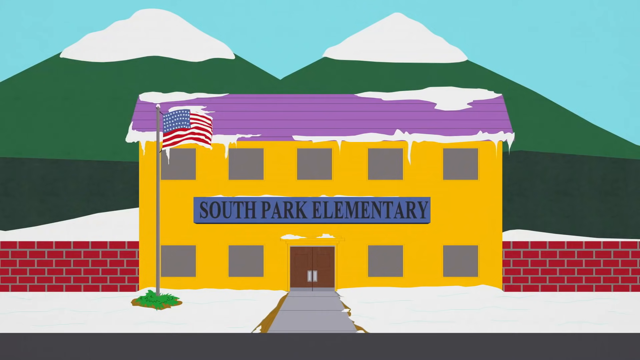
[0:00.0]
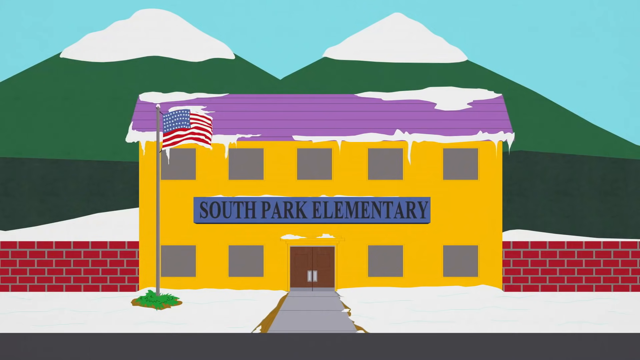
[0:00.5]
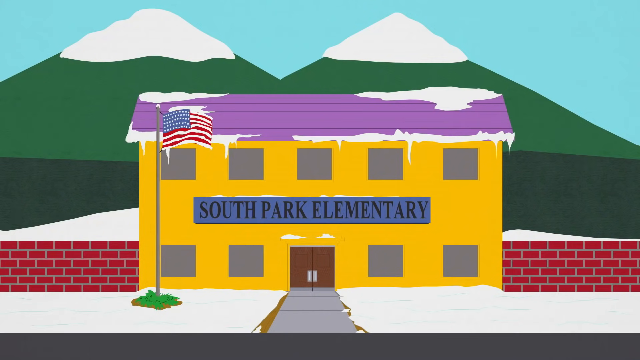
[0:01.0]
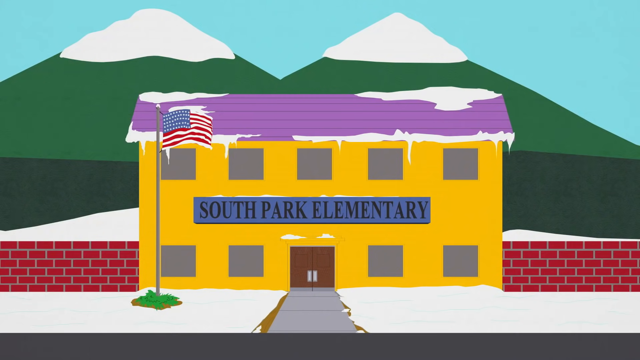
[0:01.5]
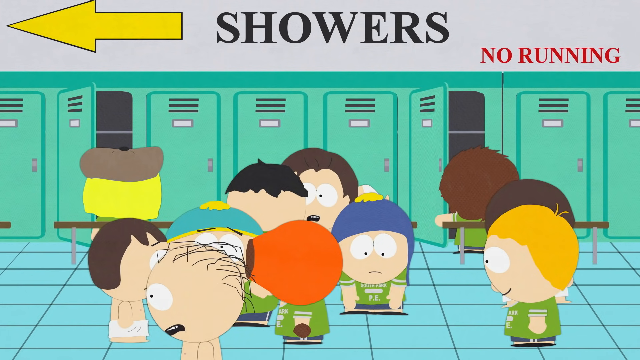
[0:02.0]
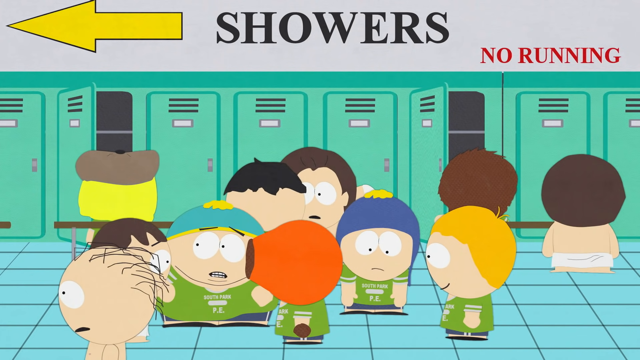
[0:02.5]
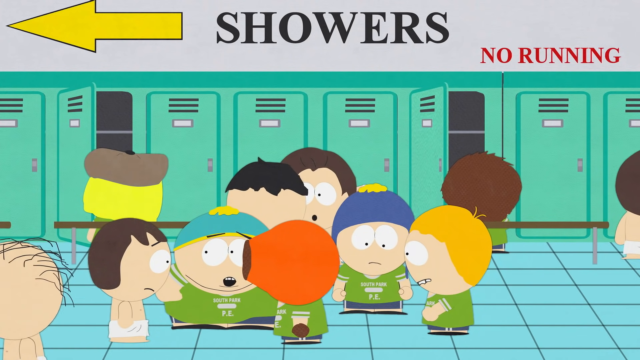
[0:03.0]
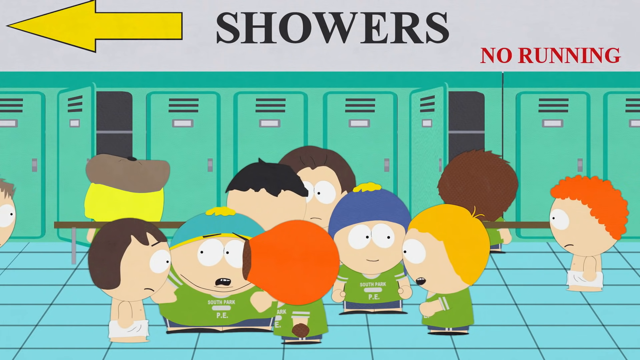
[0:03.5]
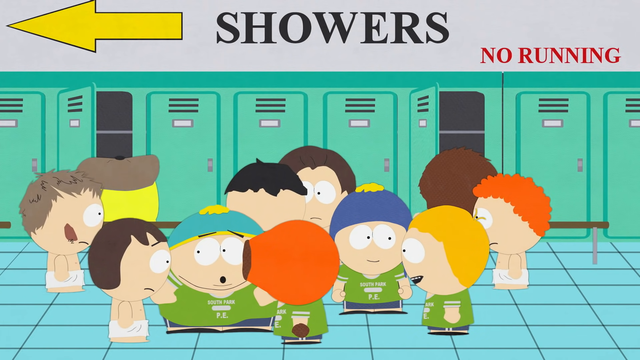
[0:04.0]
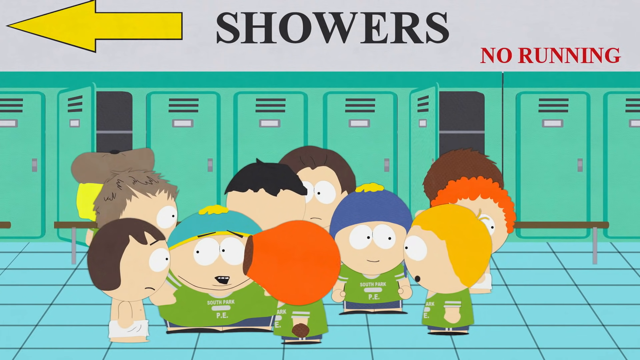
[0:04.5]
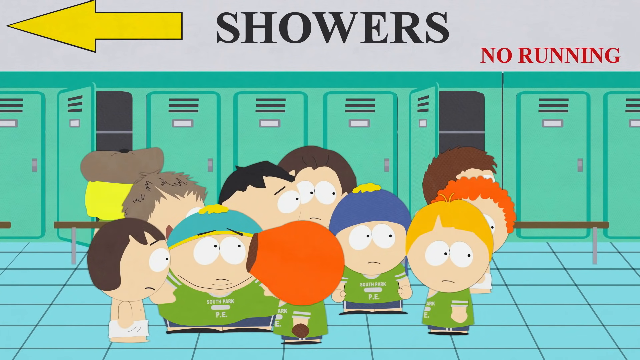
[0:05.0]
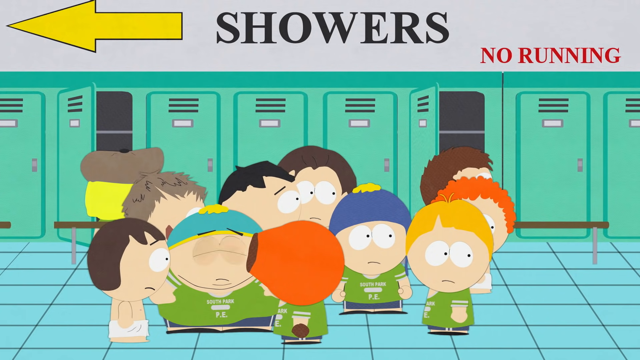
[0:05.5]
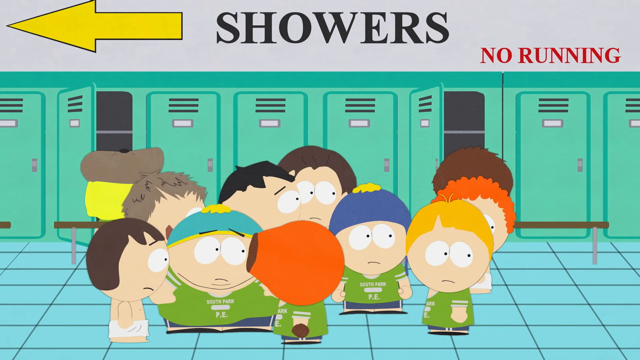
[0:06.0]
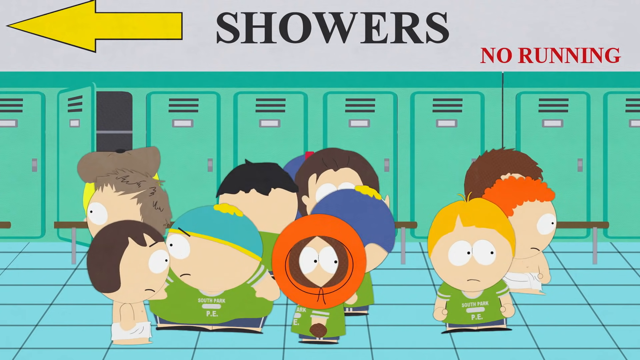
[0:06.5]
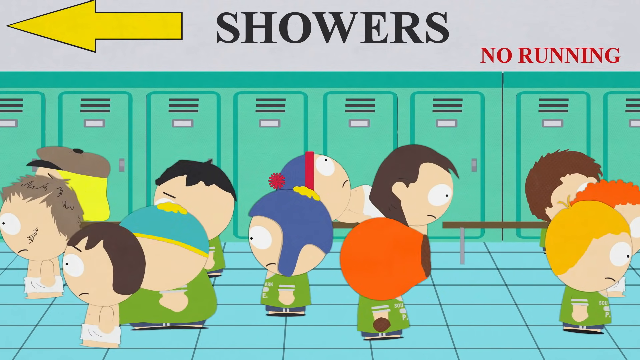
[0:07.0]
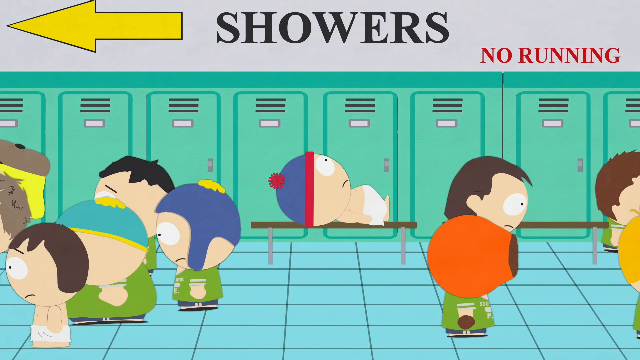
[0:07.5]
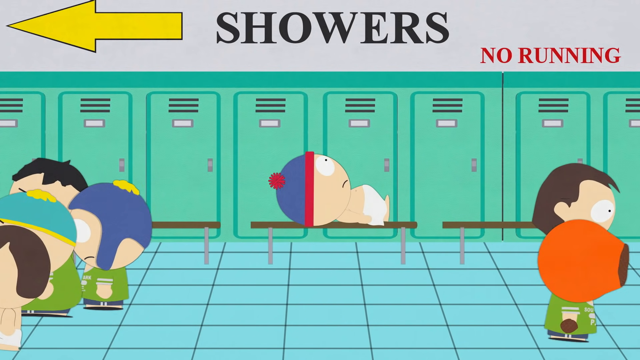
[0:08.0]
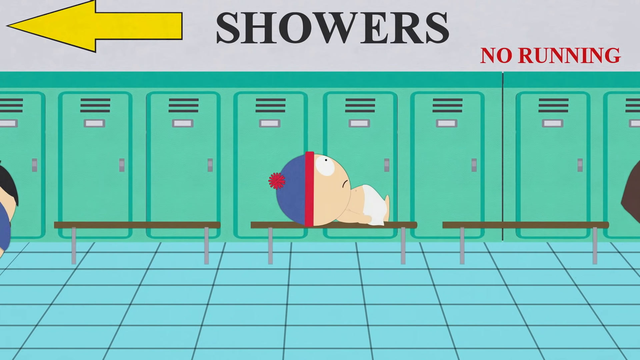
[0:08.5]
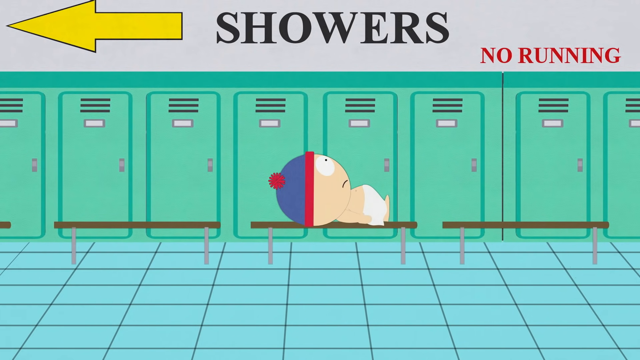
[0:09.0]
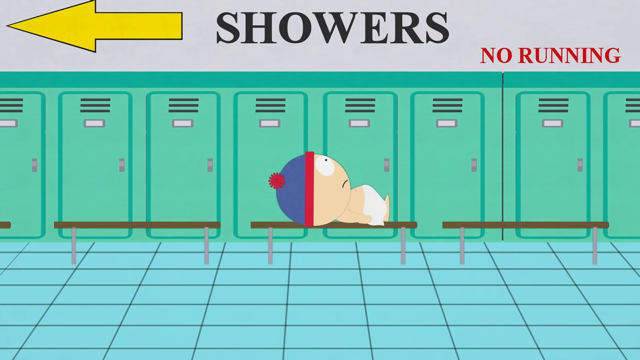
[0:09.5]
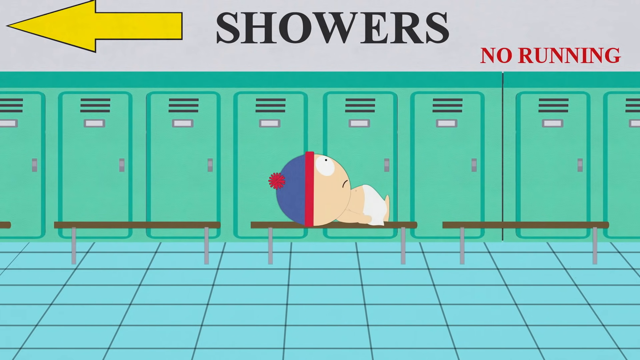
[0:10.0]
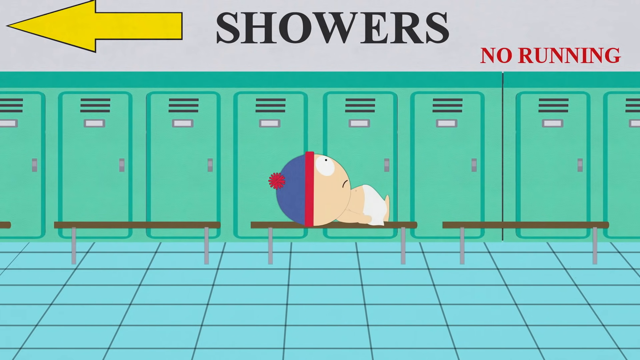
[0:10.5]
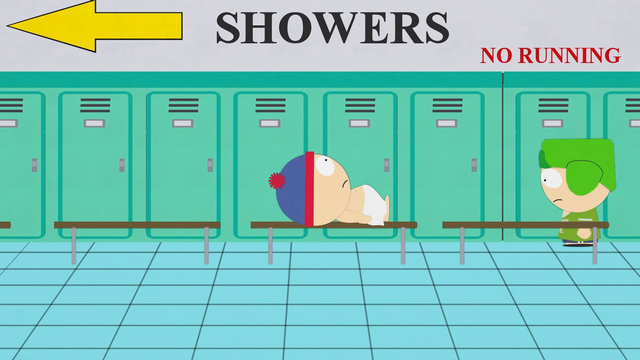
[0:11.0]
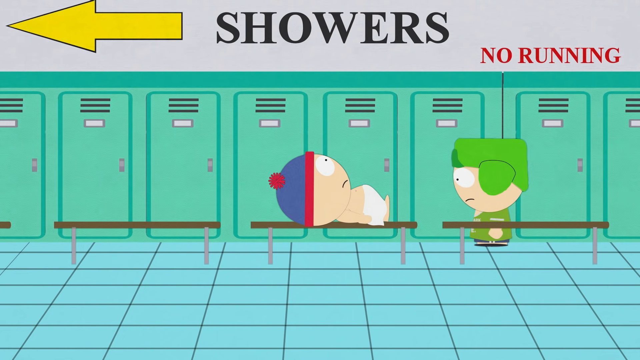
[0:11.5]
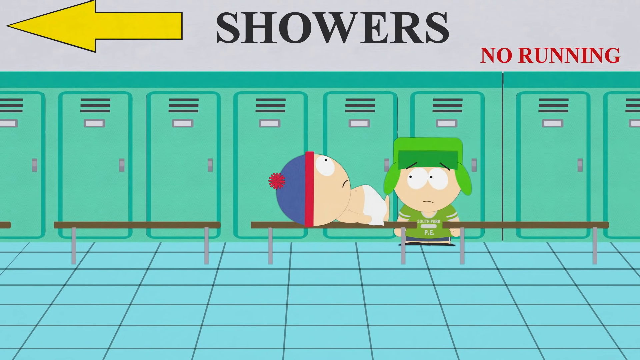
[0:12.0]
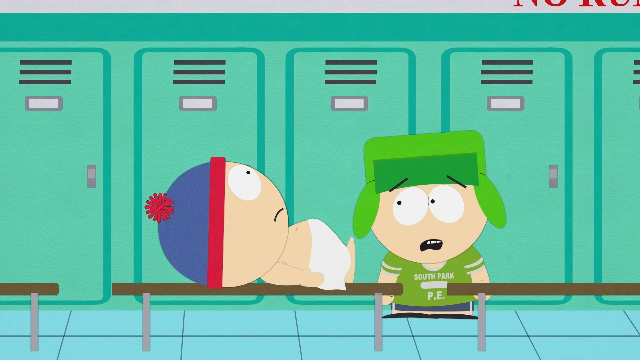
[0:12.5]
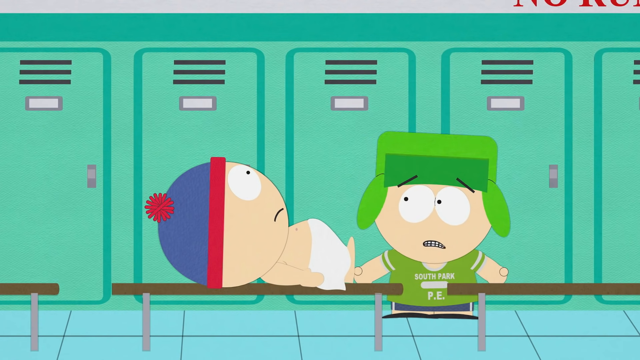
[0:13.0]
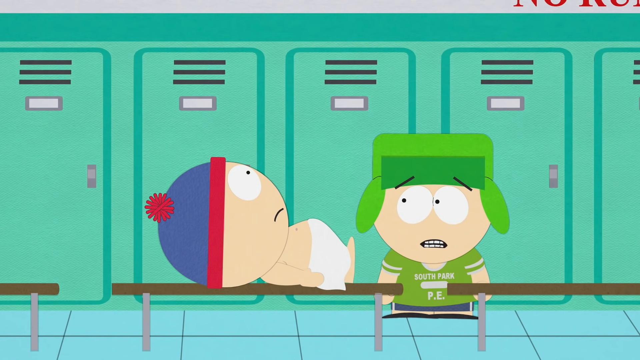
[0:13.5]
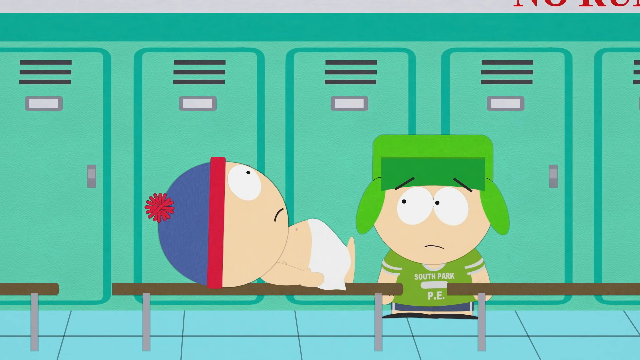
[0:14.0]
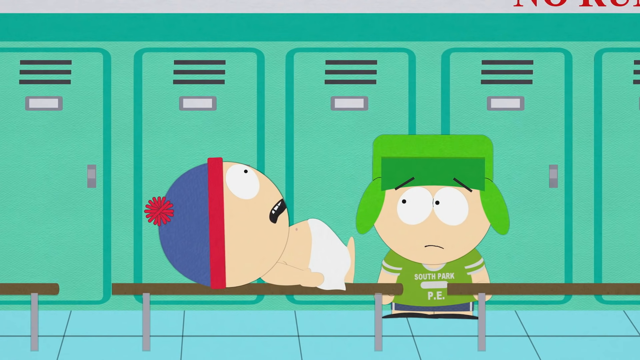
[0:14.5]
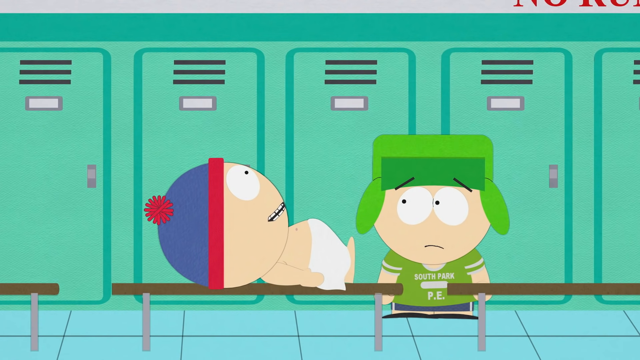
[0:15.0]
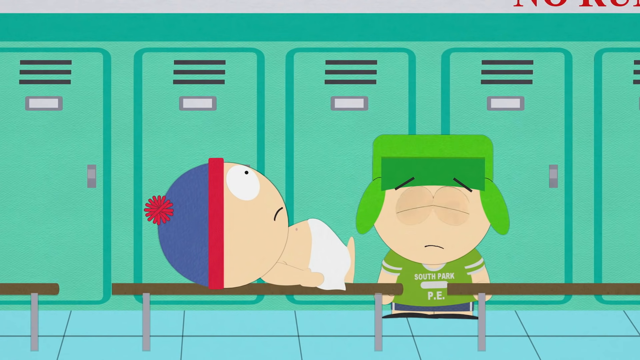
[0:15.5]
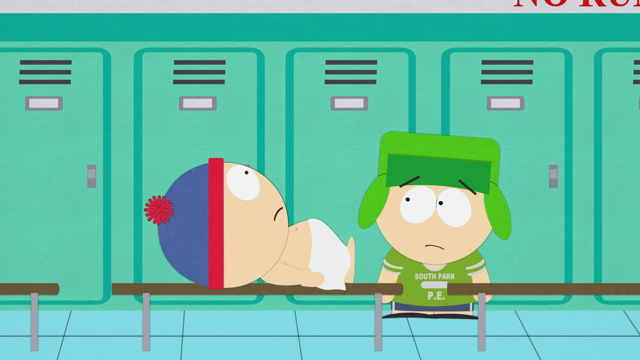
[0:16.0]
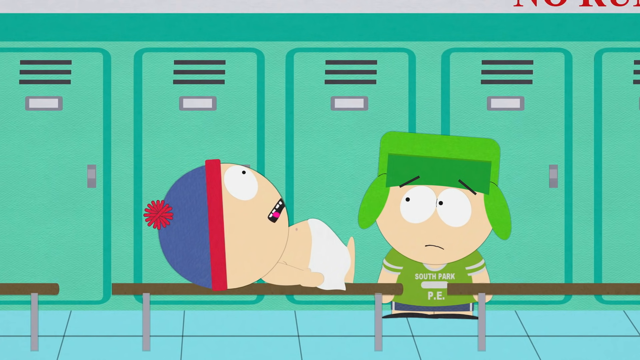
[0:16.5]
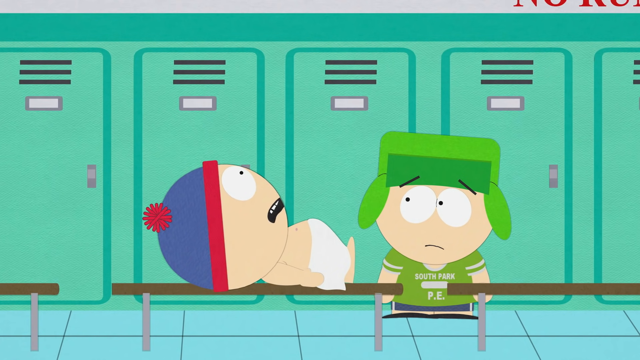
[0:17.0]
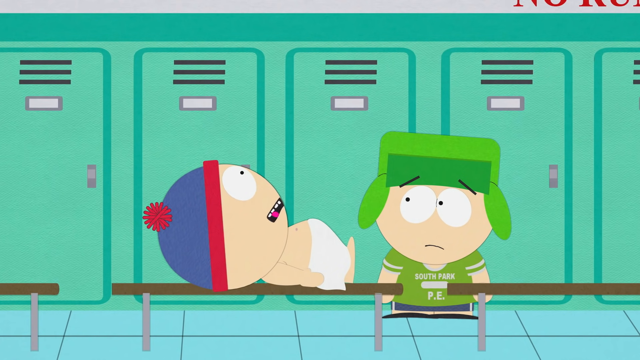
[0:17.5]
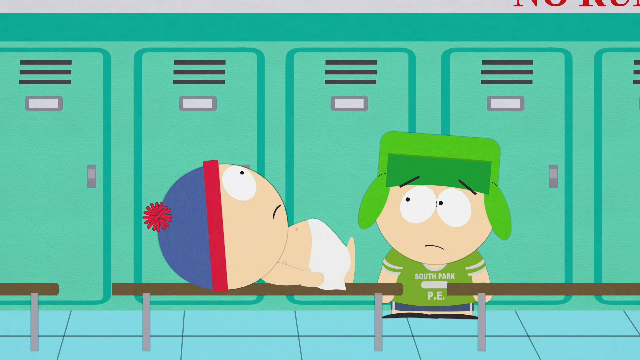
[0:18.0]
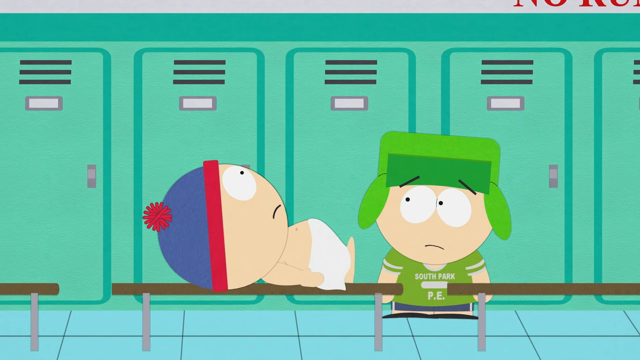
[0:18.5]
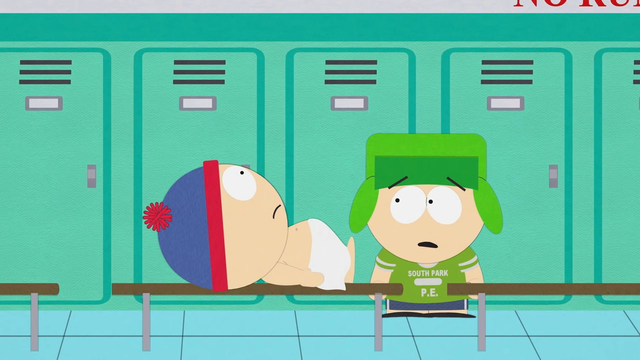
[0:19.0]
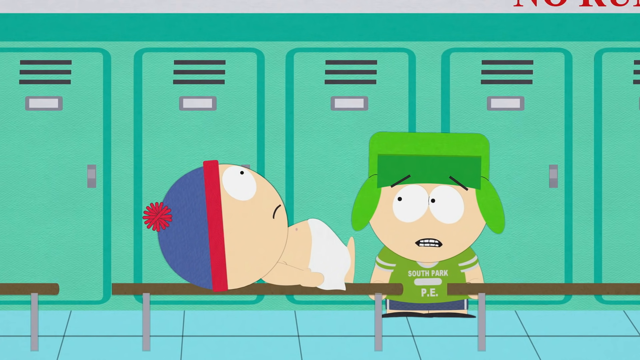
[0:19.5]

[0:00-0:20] The scene opens at South Park Elementary in South Park. A sign reads "showers, no running," so the setting appears to be a locker room. Stan and Kyle are talking in the locker room; Stan seems to be lying on a bench, wearing a towel. The school is painted yellow, with an American flag out front and a brick wall on either side of it. There are mountains in the background with snow-capped tops, the sky is blue, and the flag is waving. In the locker room, the kids are going through their lockers, which are sort of turquoise or light blue.